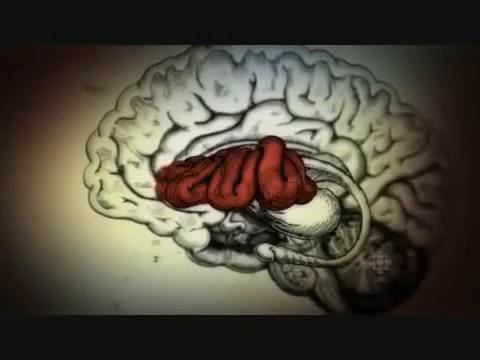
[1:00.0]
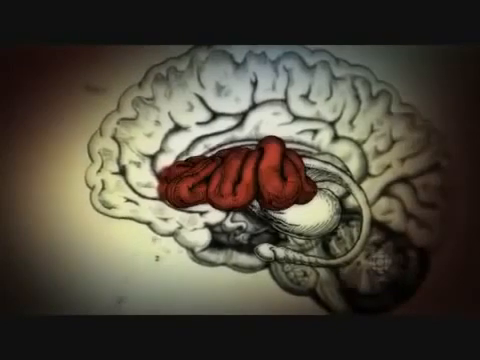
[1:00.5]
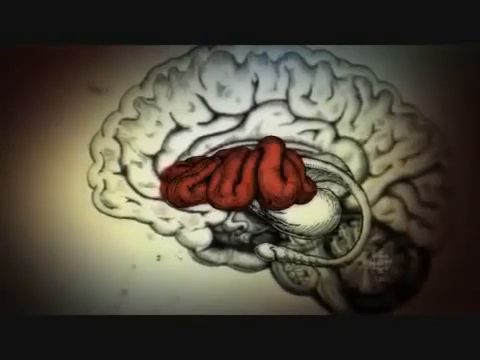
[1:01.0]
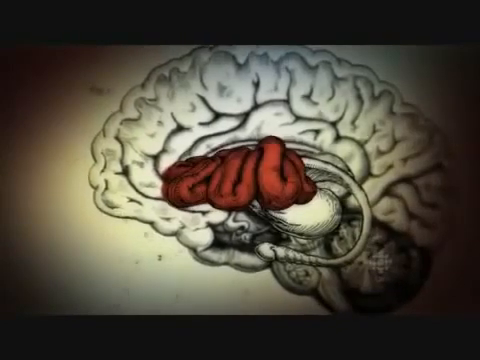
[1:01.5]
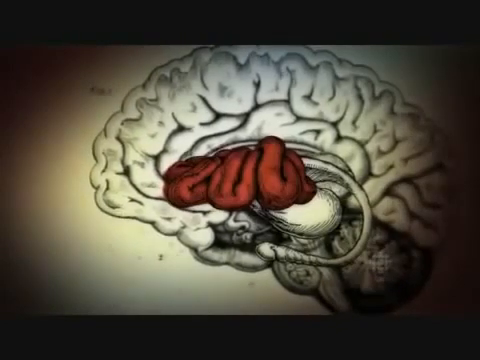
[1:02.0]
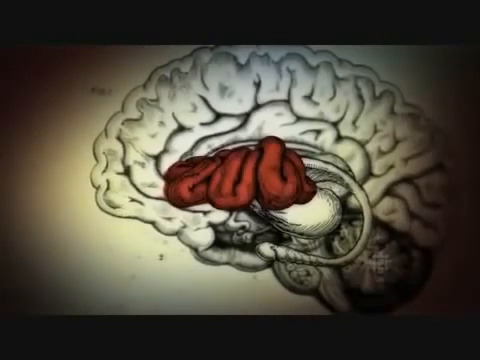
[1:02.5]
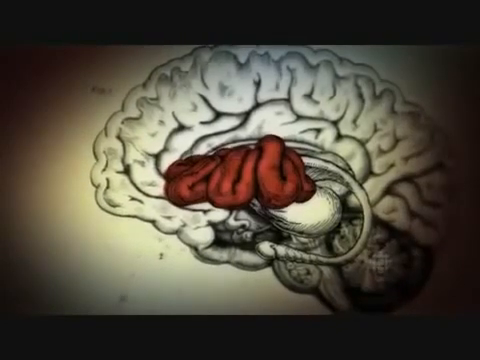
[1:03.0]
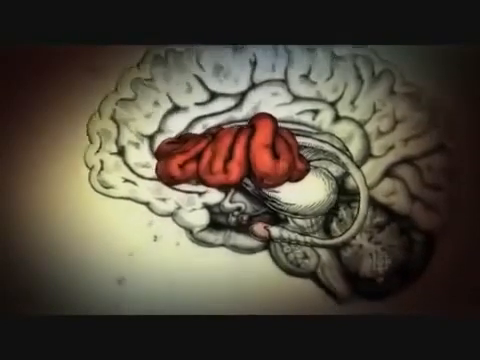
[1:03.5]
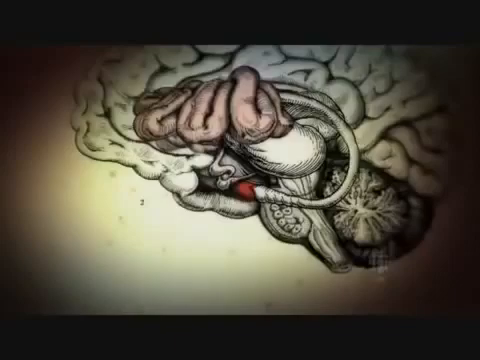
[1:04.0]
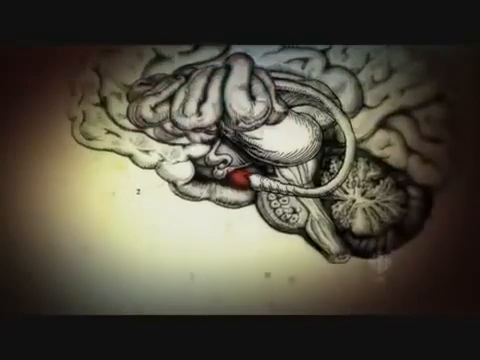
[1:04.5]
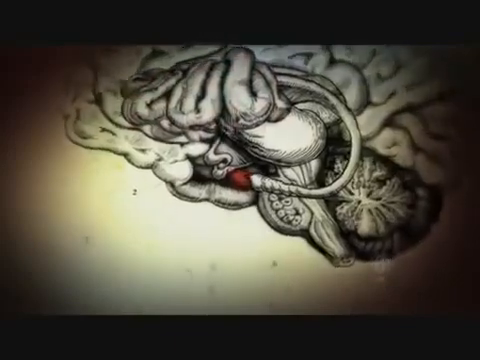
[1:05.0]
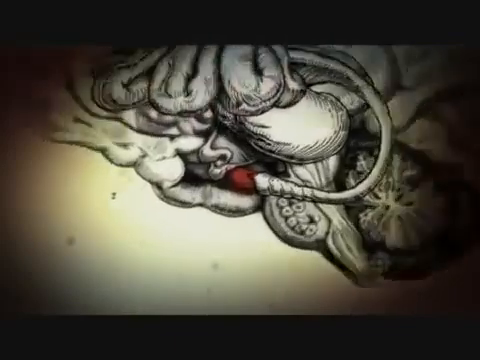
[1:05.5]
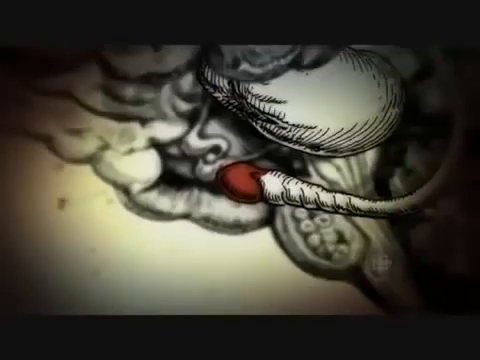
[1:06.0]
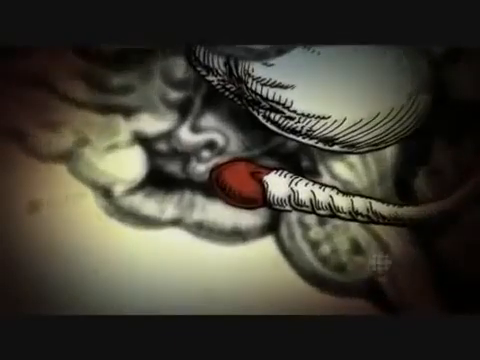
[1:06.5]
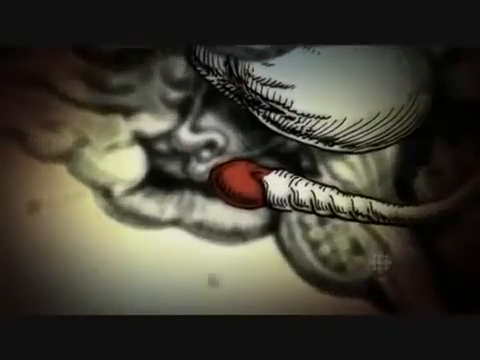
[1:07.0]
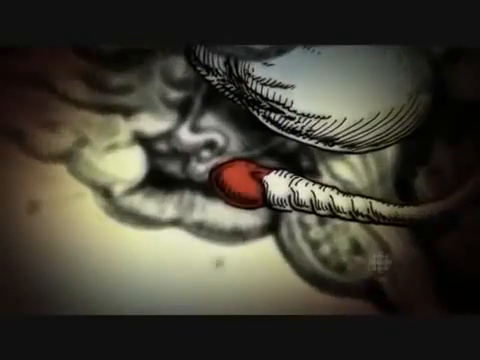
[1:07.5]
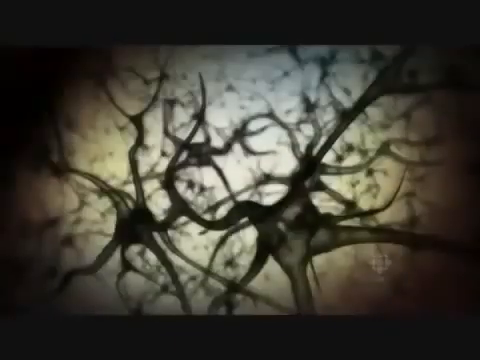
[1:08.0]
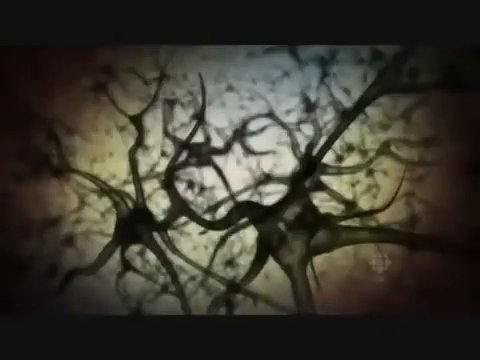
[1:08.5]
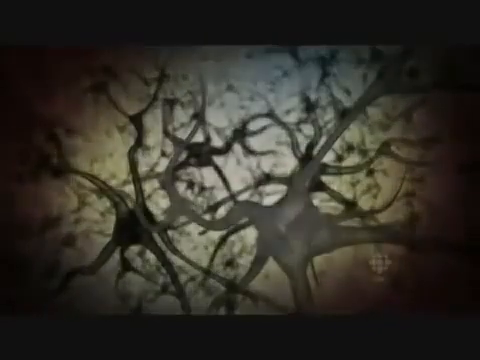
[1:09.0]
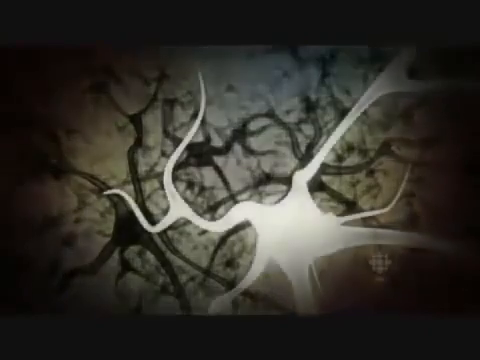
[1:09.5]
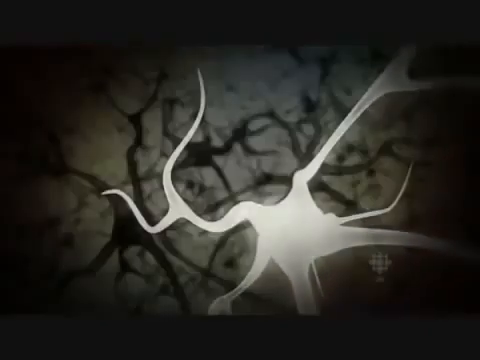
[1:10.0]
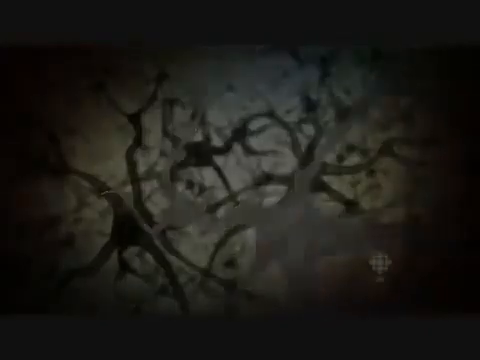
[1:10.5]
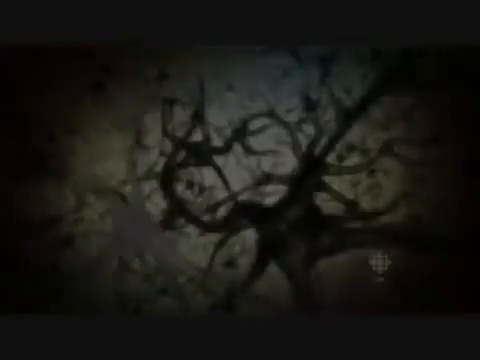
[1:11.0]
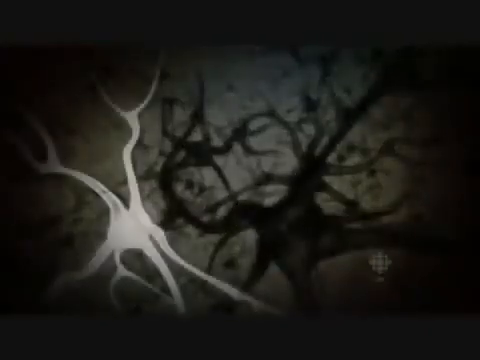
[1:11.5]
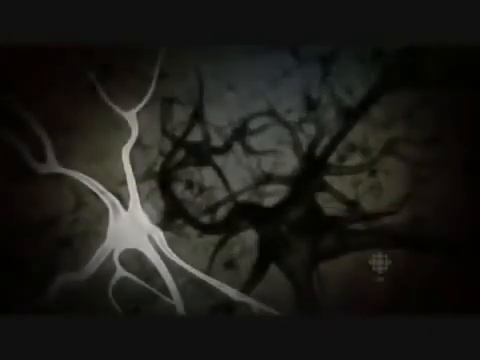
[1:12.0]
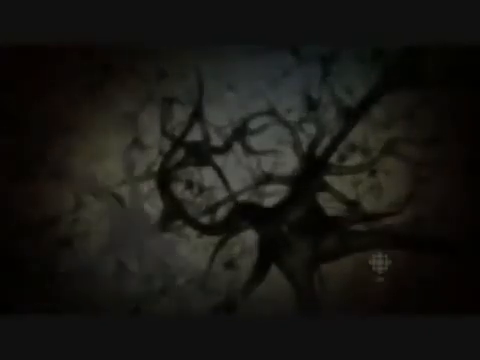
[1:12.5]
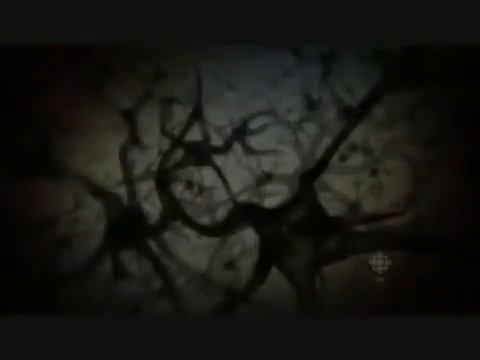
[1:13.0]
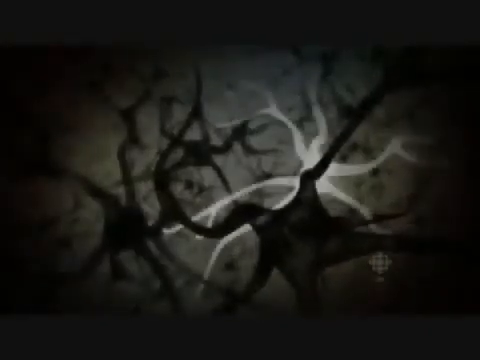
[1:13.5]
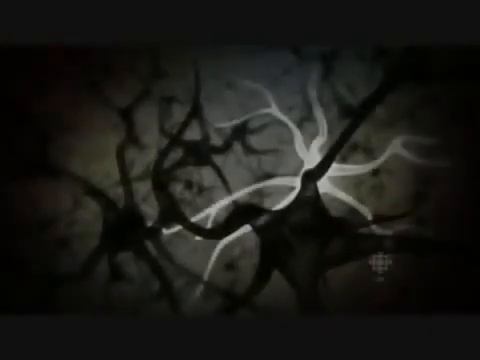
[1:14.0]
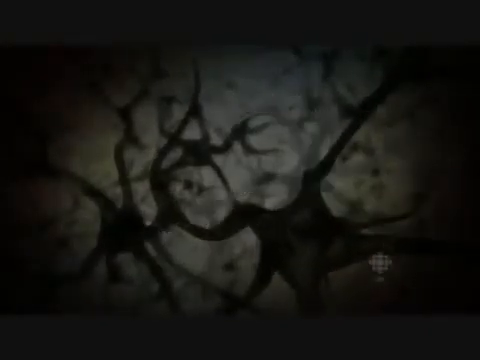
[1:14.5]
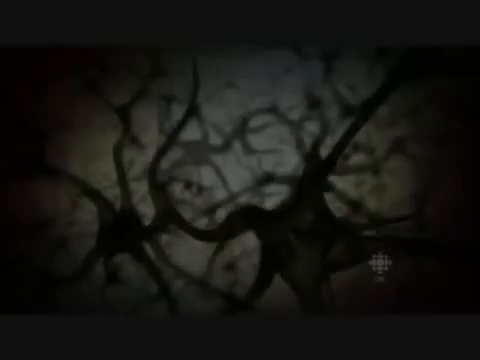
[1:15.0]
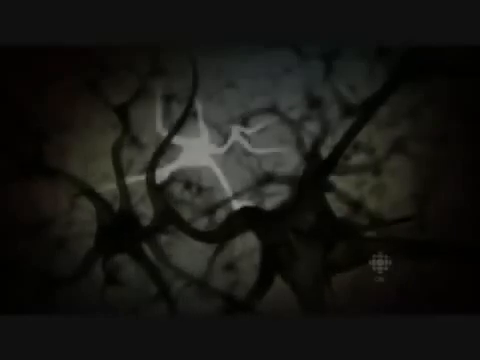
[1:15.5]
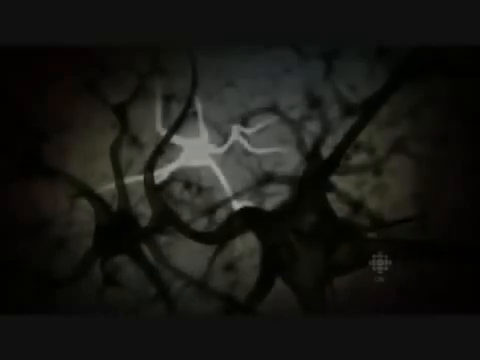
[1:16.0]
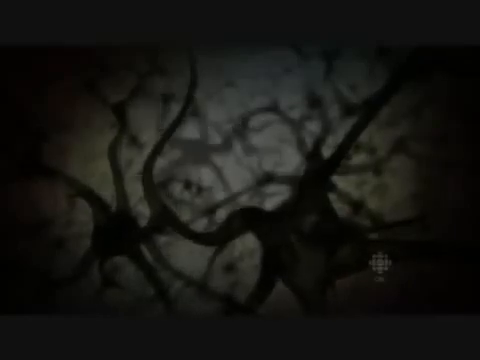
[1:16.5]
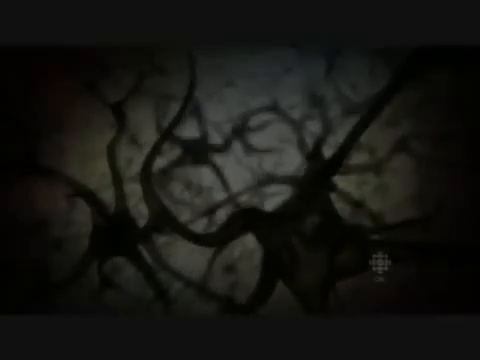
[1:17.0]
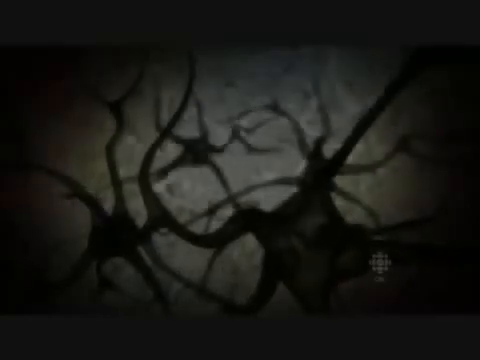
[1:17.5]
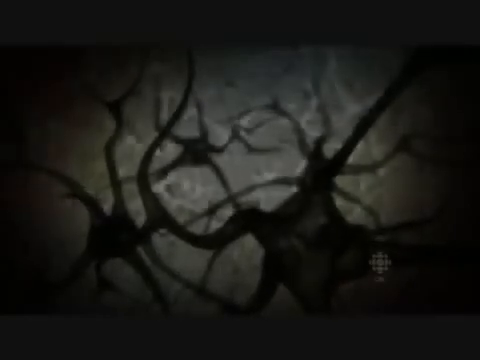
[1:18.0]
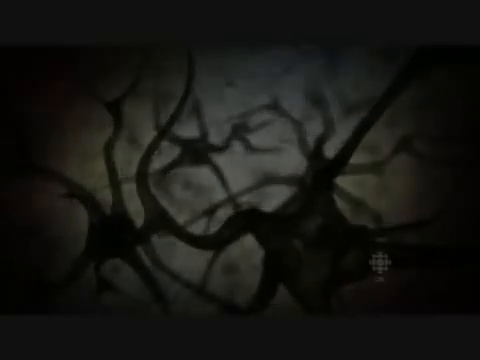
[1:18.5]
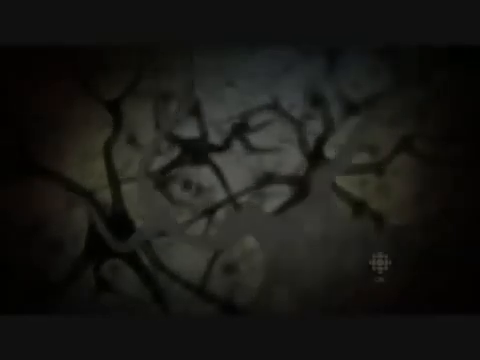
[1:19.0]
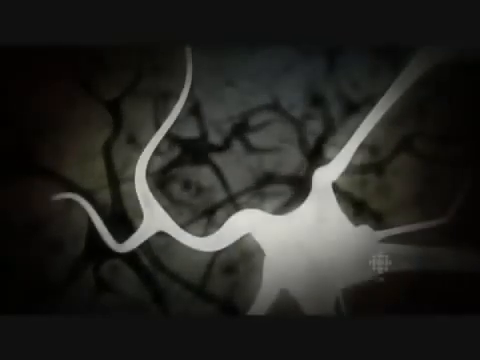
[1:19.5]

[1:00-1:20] The red colored part becomes darker, a dark red, dark burgundy color, and the view shifts downward to this little red part. The view zooms in to this little part of the brain, revealing a bunch of neurons inside the brain. A neuron on the right side flashes, getting bright and then dark, and the same happens to a neuron on the left side. A neuron in the background to the right side becomes very white and fades dark again, and another neuron in the background to the left side becomes very bright and then dark. A neuron in front on the right side becomes white.